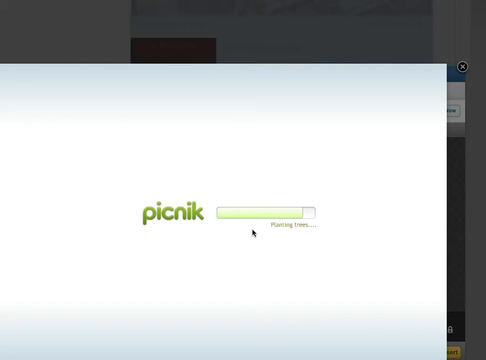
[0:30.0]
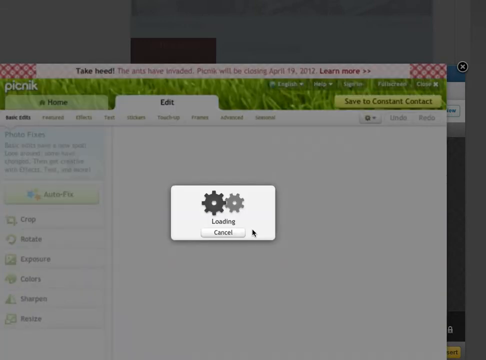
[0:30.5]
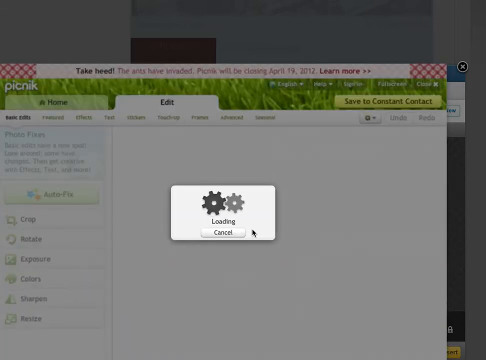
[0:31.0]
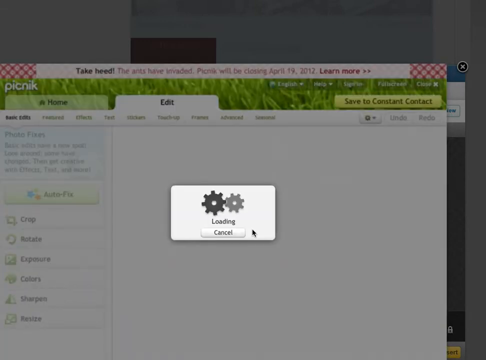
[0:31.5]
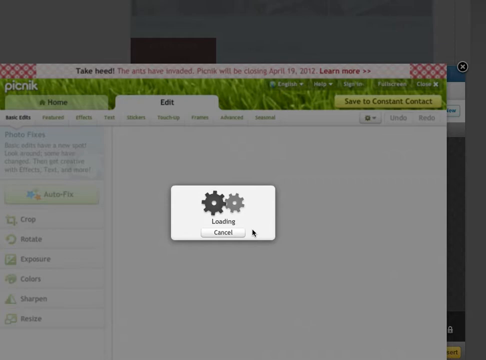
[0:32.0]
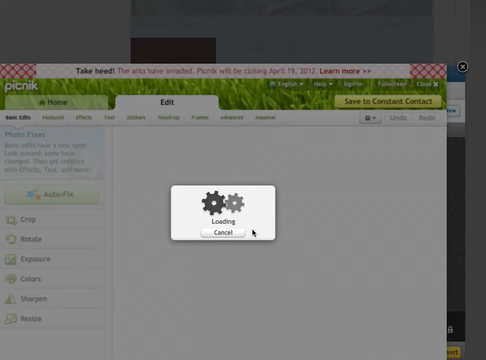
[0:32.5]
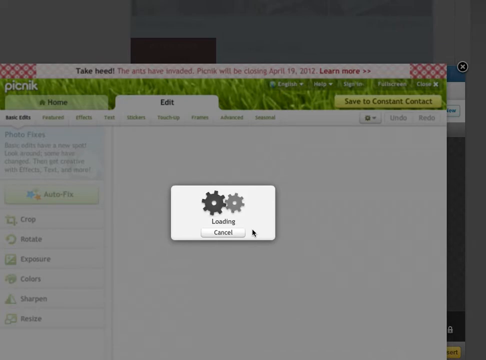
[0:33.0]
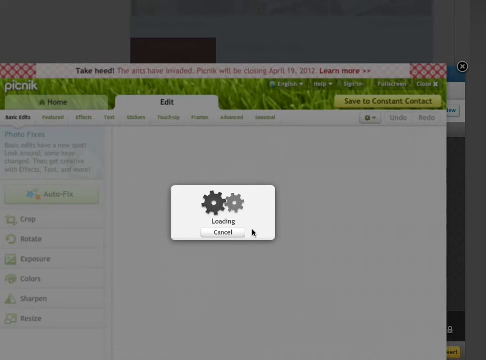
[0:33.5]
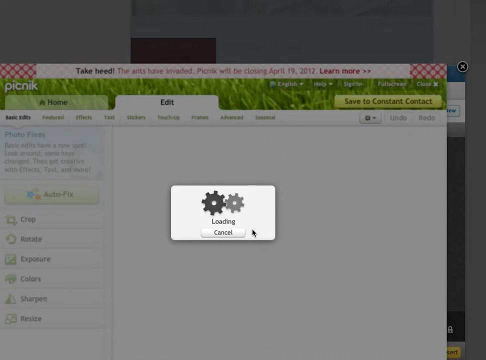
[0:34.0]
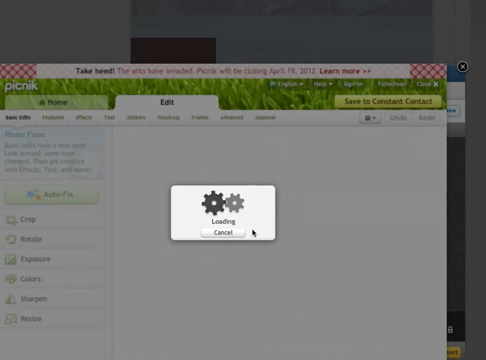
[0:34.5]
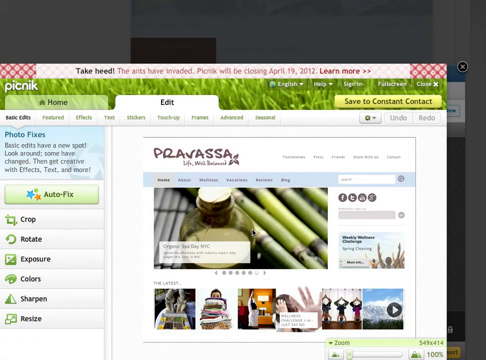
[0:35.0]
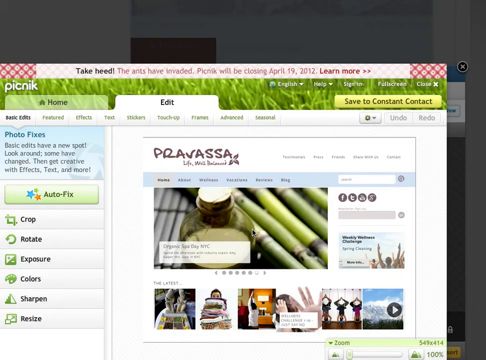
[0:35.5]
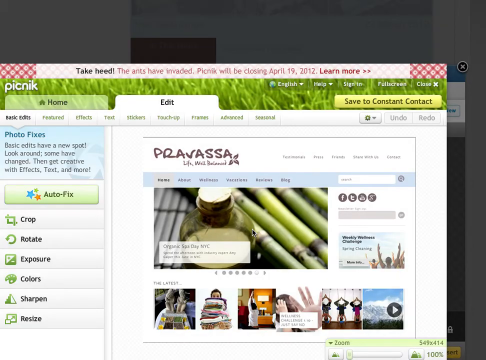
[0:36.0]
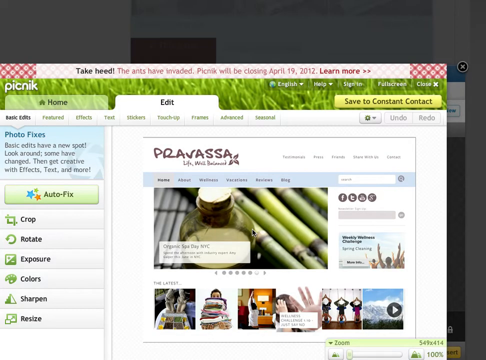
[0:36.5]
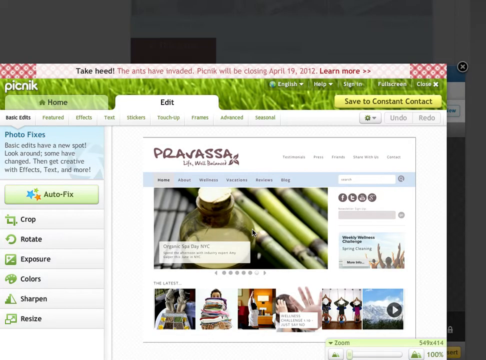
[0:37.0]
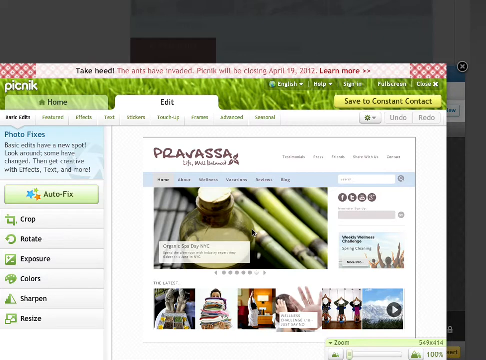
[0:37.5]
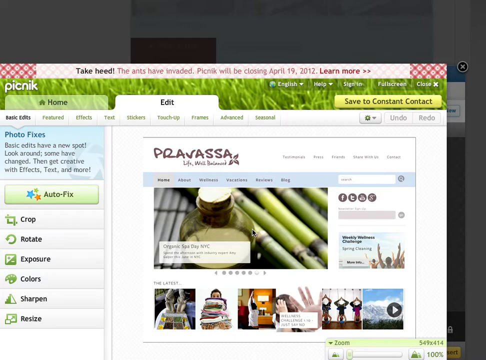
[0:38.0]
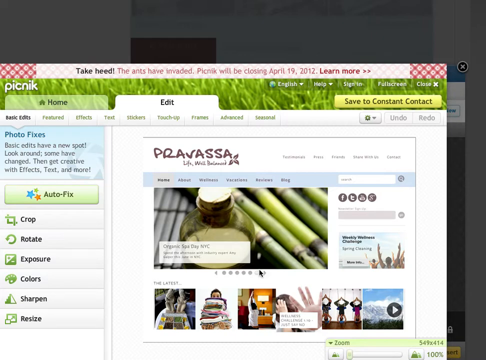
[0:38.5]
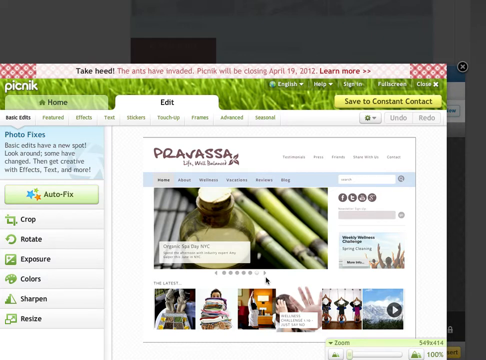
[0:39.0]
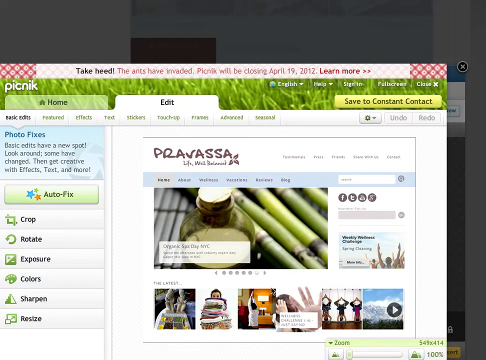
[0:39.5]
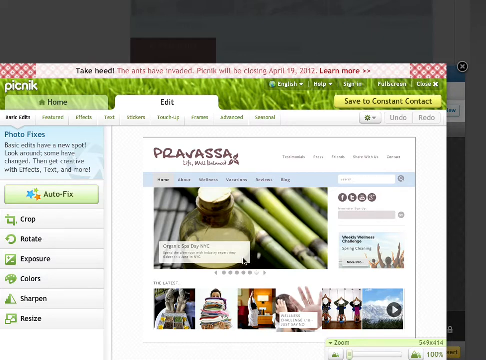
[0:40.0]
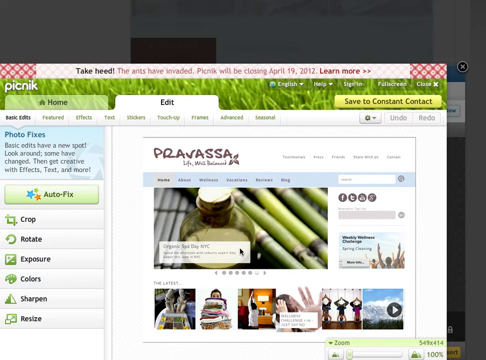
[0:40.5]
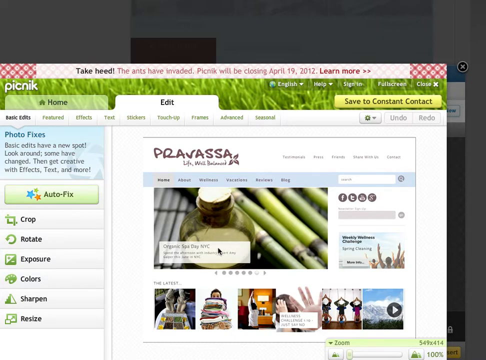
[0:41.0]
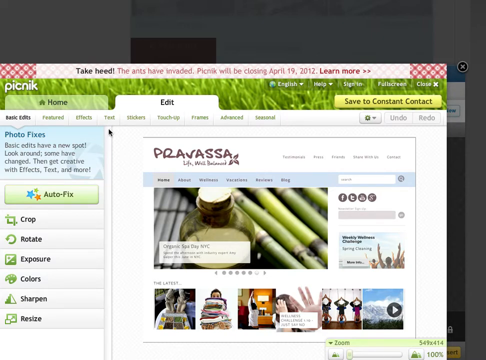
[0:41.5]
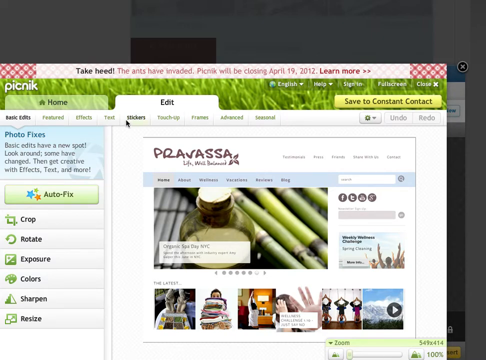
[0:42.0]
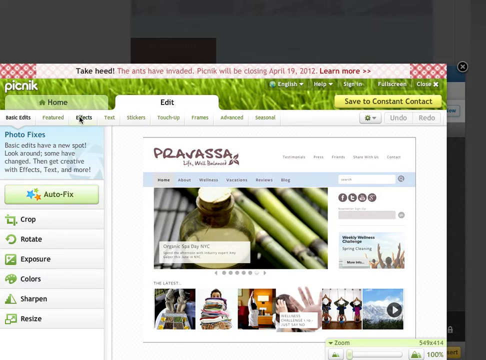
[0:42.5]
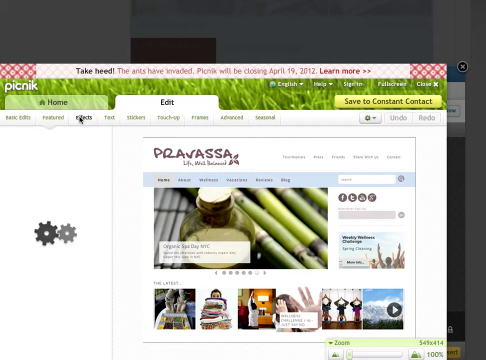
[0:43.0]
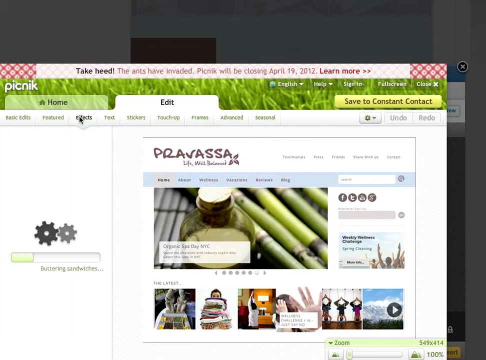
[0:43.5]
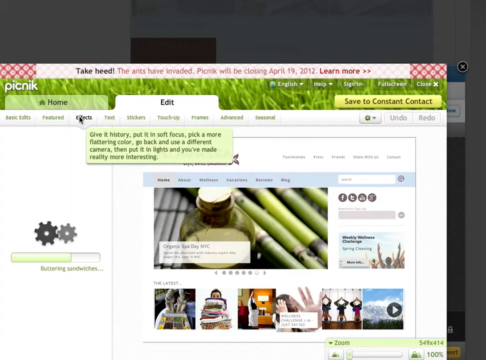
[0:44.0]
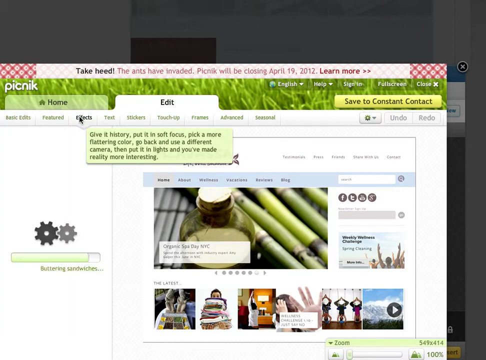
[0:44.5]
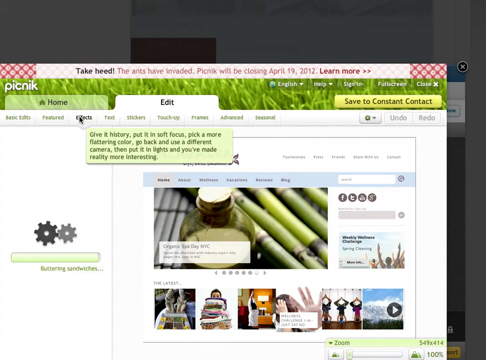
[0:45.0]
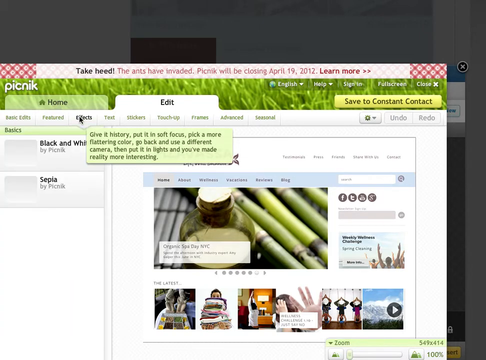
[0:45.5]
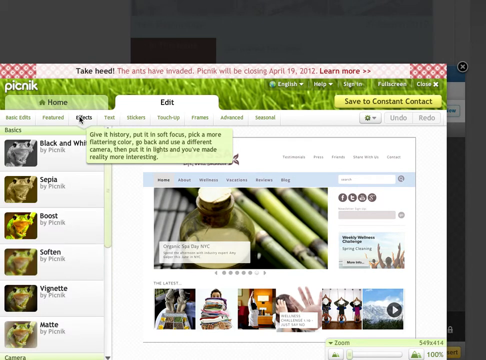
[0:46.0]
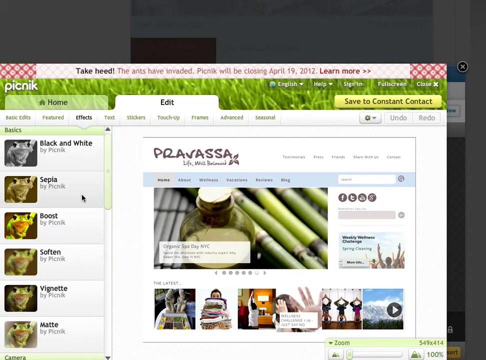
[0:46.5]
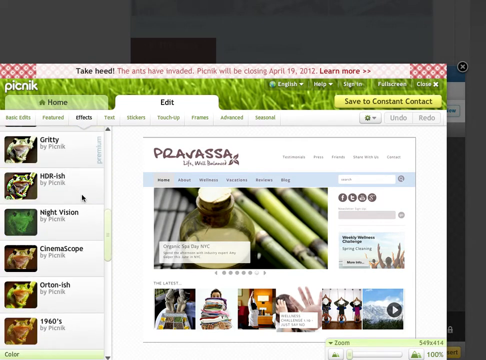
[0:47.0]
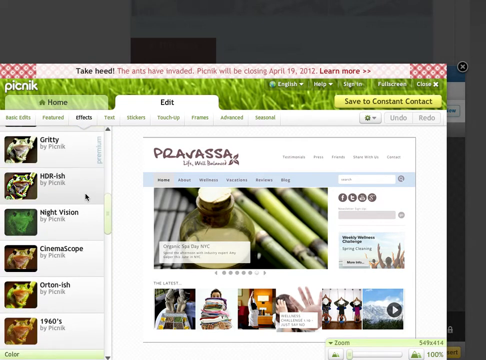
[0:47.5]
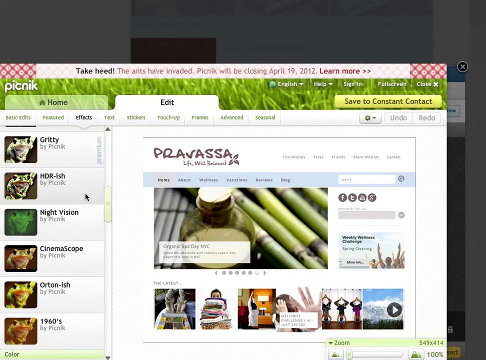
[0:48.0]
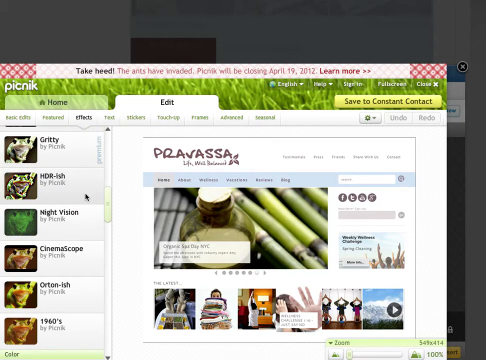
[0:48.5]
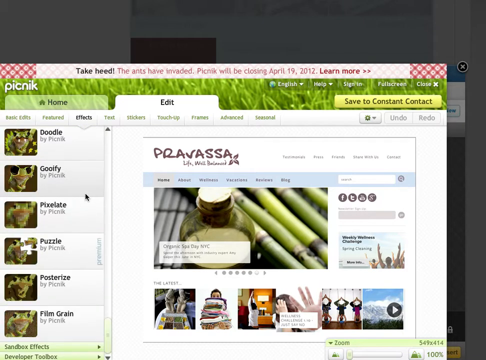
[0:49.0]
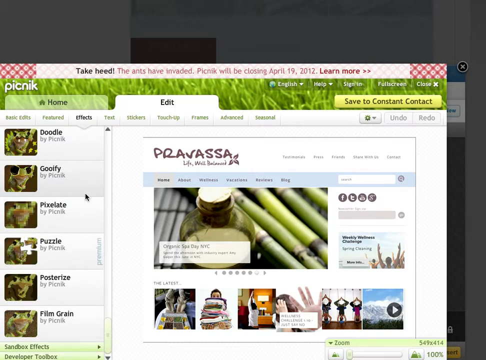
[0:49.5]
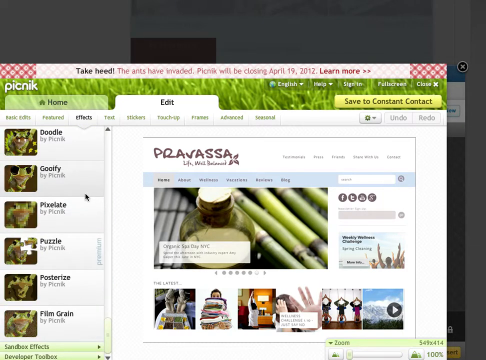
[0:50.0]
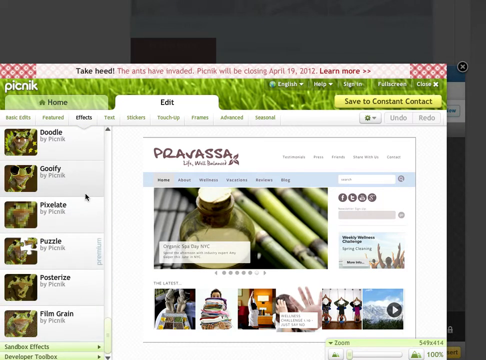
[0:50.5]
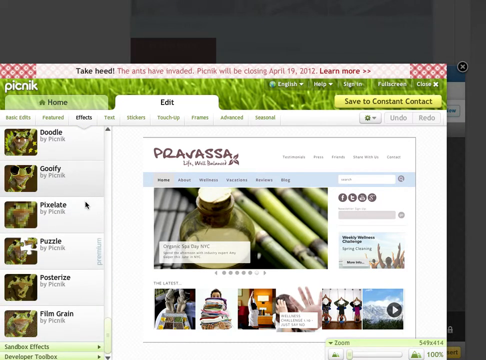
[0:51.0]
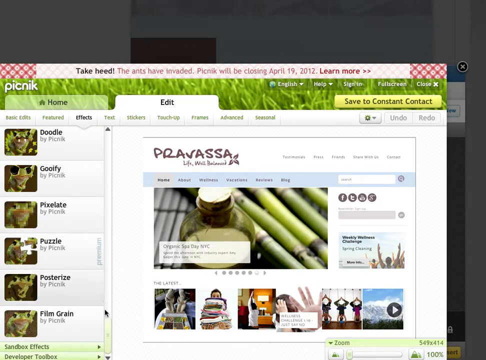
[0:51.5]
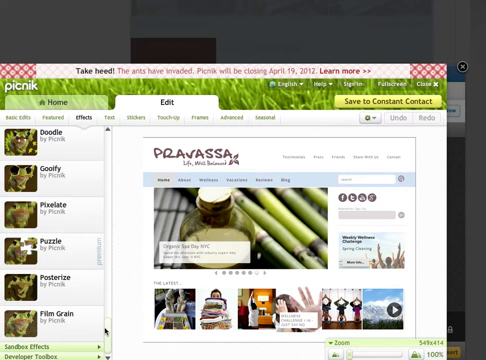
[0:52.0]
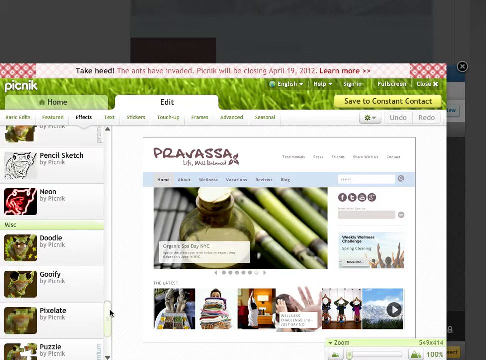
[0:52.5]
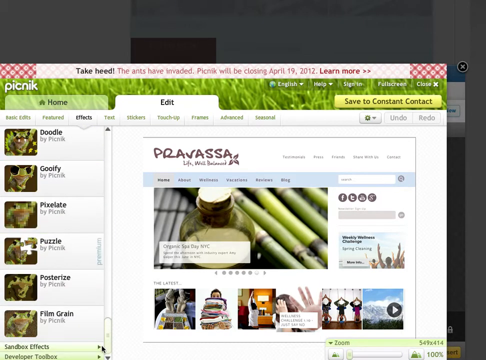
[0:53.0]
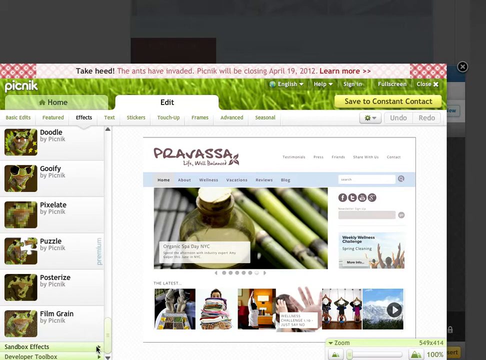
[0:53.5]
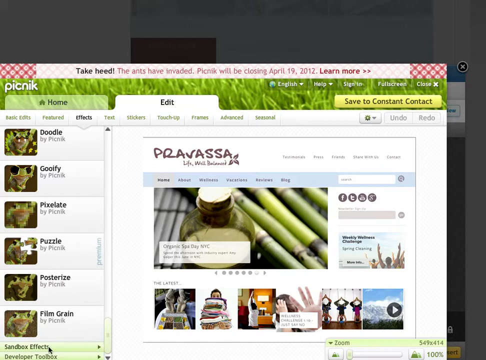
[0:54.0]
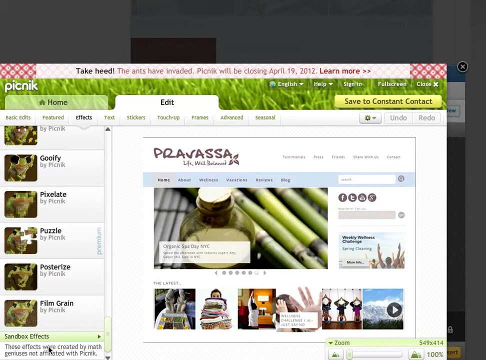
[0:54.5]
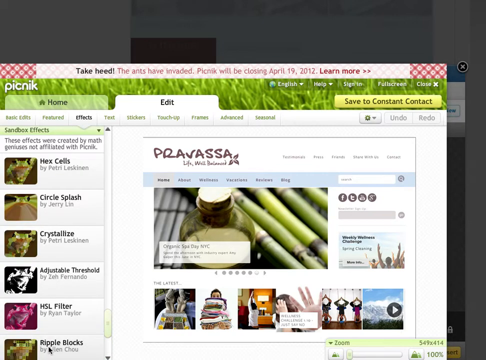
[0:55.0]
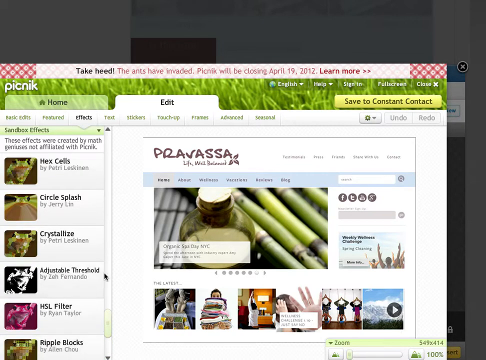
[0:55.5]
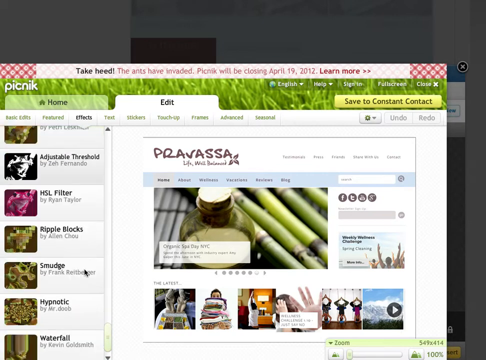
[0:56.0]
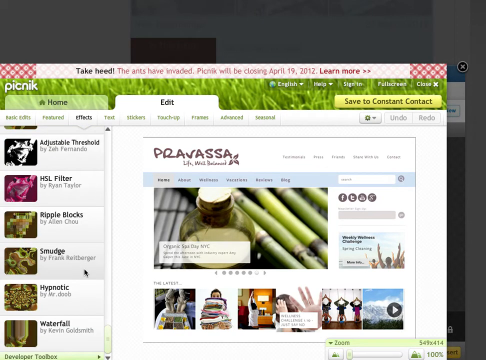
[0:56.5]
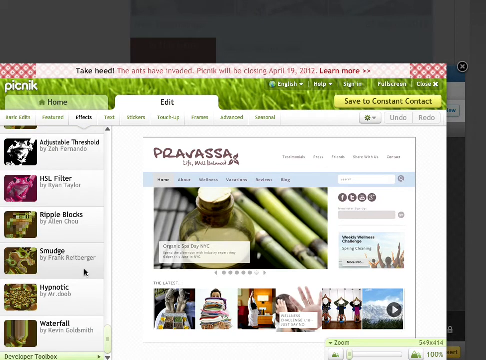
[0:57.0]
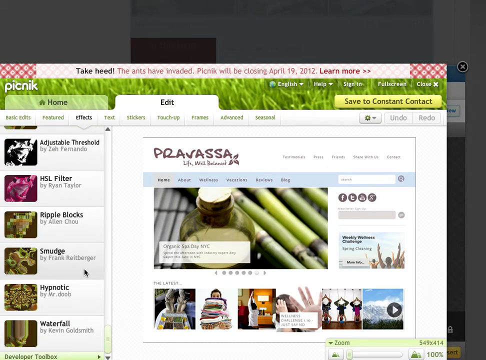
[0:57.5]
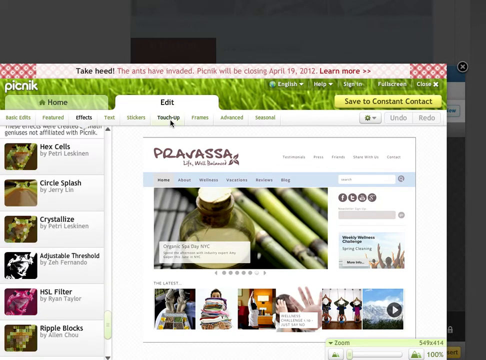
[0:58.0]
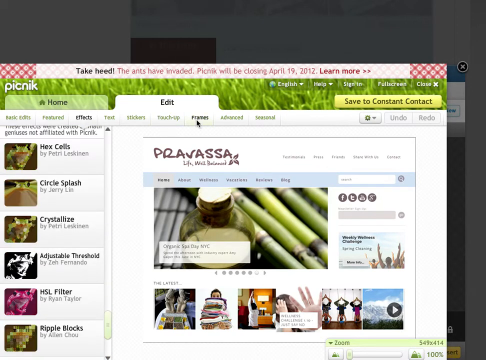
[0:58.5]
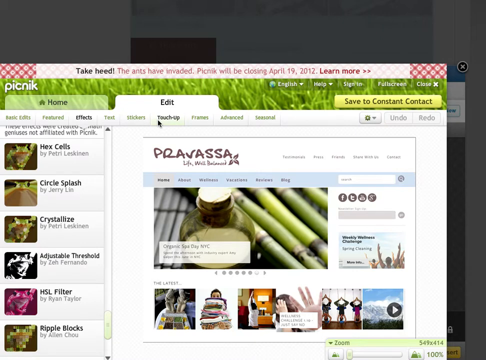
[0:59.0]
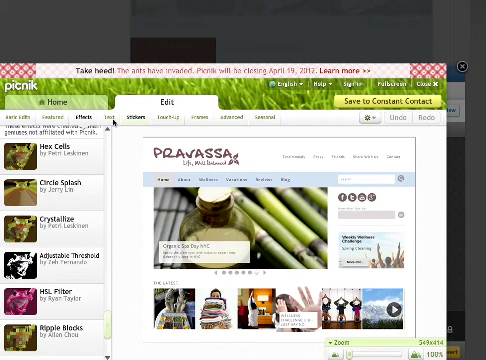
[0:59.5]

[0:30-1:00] The computer screen shows two gears and a white box in the middle that says "loading" with the word "cancel". A black arrow points up to the gears. The gears are round, one black and a smaller gray one, with their teeth sticking out and connecting. A red box points up to the gears. The background is muted out. Tabs for "home" and "edit" are visible. Text reads "take heed. The ants have invaded. The picnic will be closing April 19, 2012." A red box with red squares and diamonds appears on both sides of a line, and text says "Save to constant contact". On the left side is the word "PICNIK", with a red box pointing up to it about half an inch from the top. Edits are imposed on top of the picture at the top.